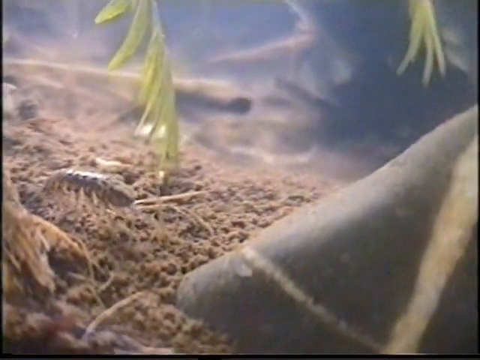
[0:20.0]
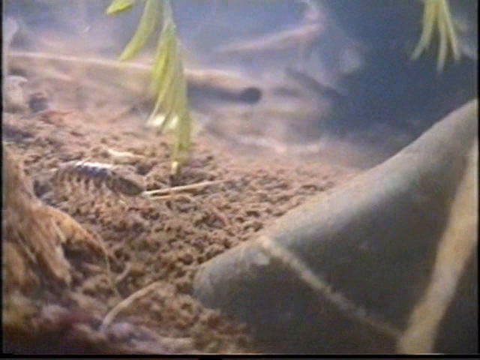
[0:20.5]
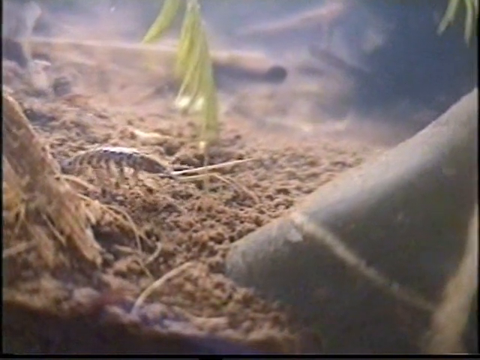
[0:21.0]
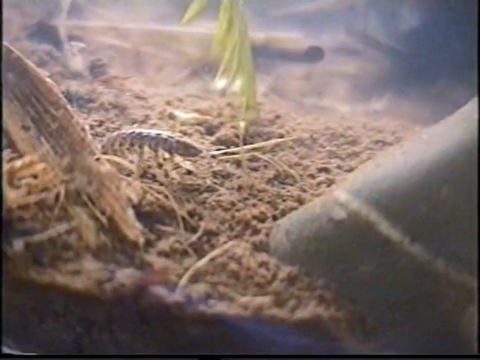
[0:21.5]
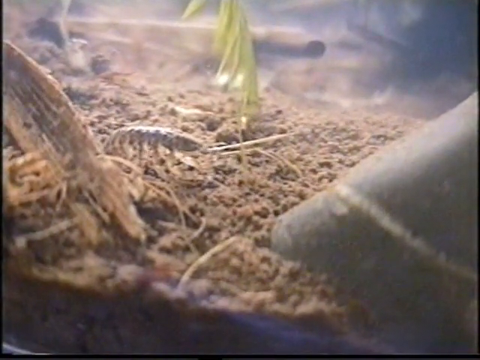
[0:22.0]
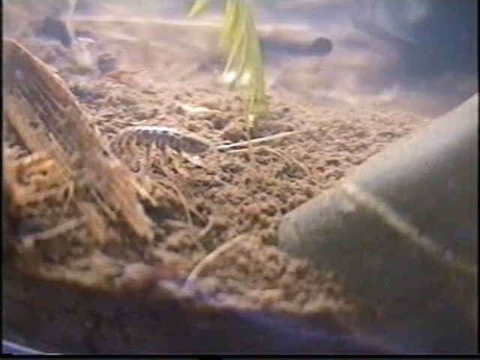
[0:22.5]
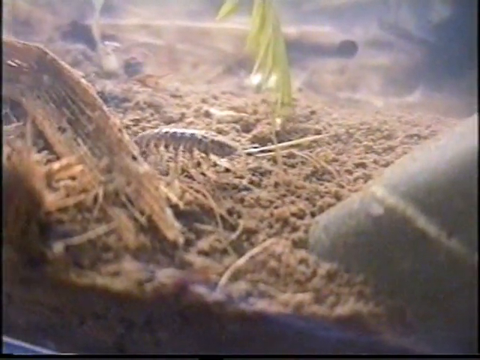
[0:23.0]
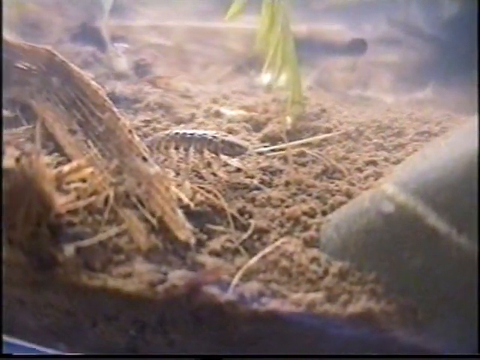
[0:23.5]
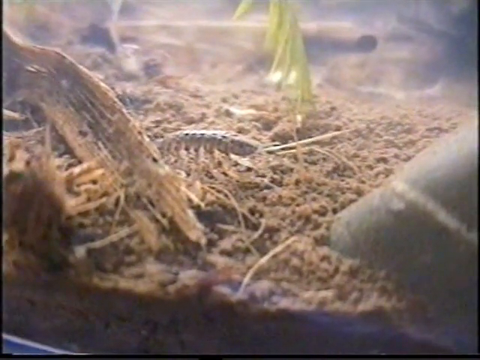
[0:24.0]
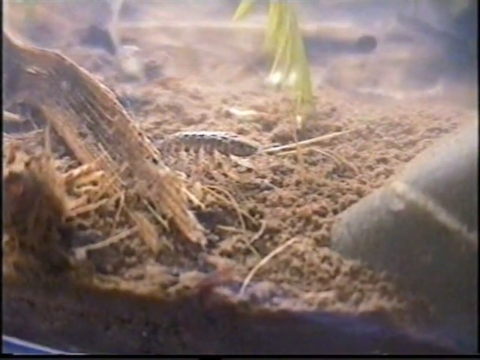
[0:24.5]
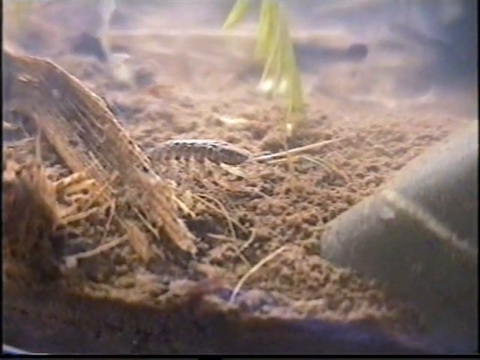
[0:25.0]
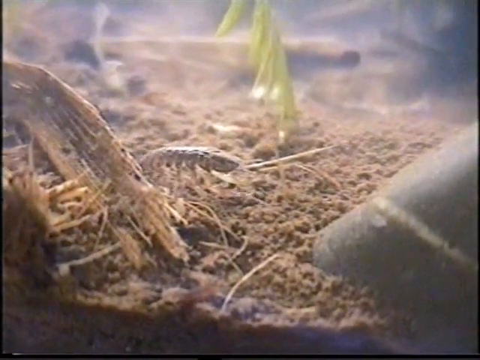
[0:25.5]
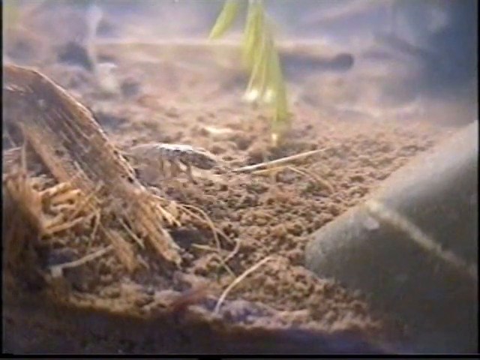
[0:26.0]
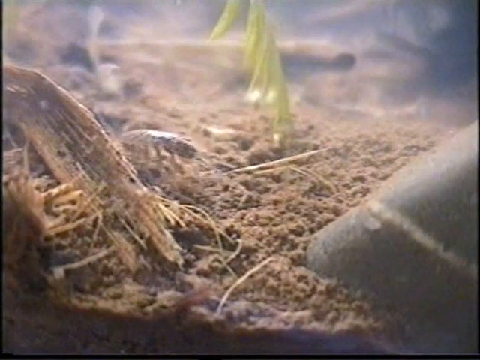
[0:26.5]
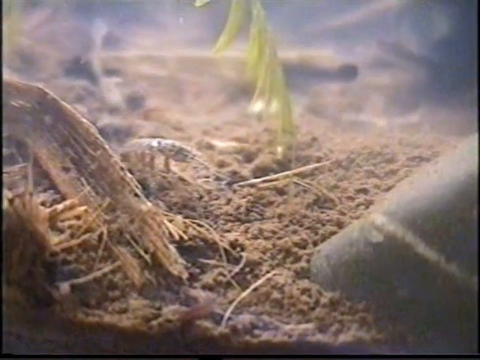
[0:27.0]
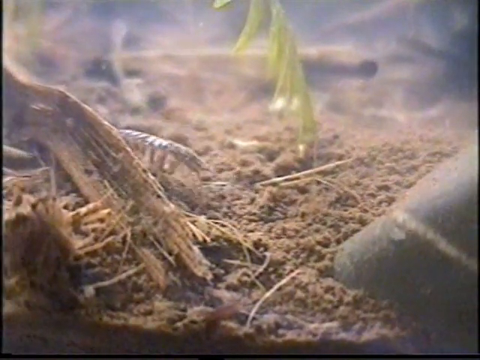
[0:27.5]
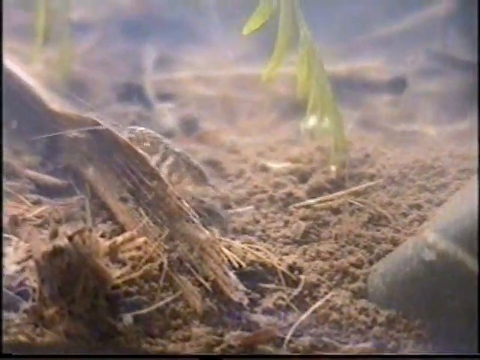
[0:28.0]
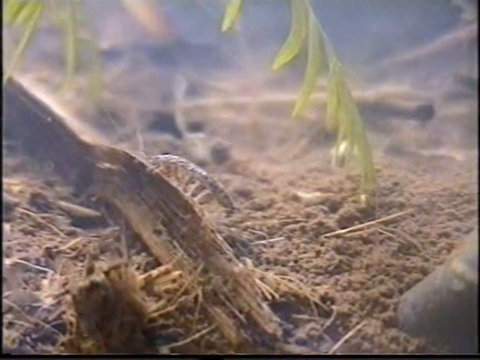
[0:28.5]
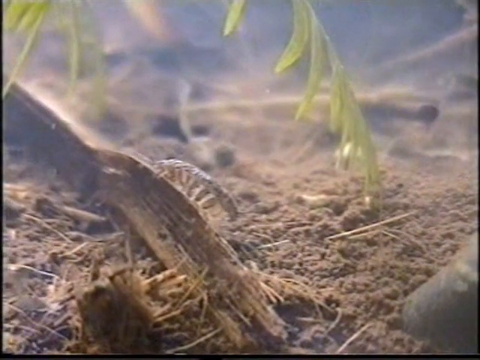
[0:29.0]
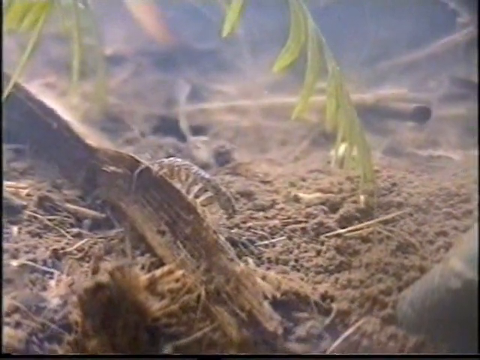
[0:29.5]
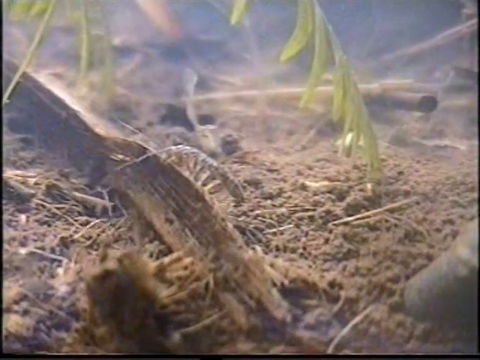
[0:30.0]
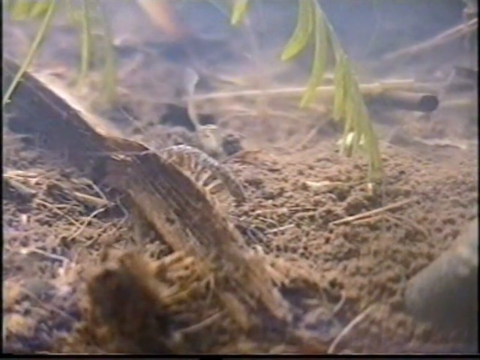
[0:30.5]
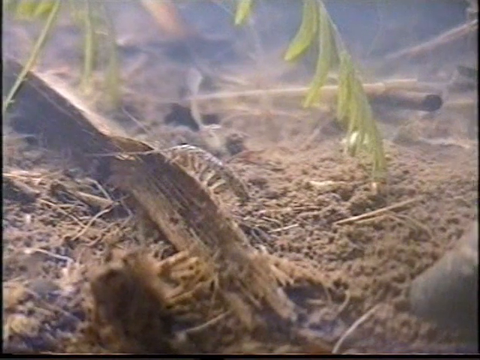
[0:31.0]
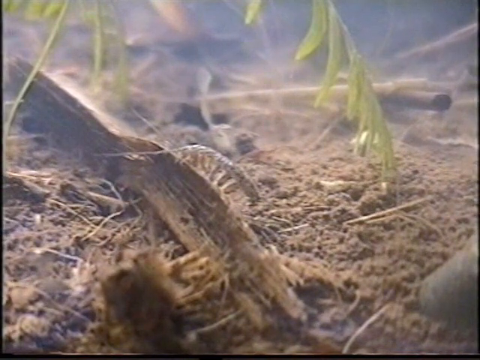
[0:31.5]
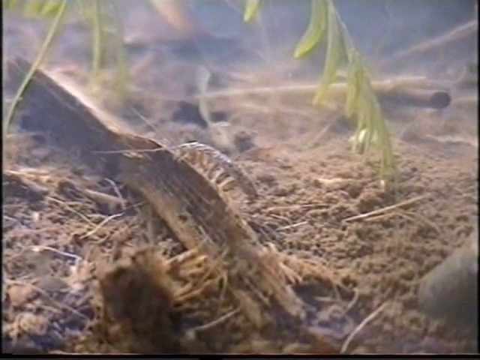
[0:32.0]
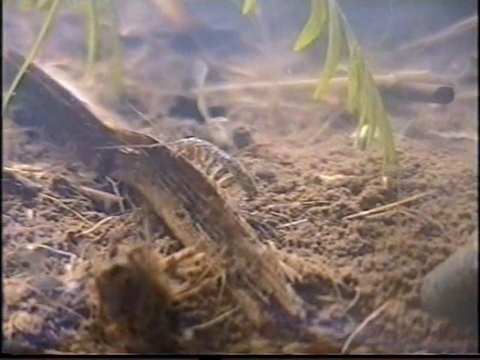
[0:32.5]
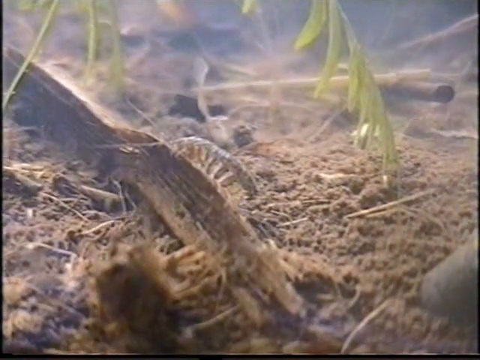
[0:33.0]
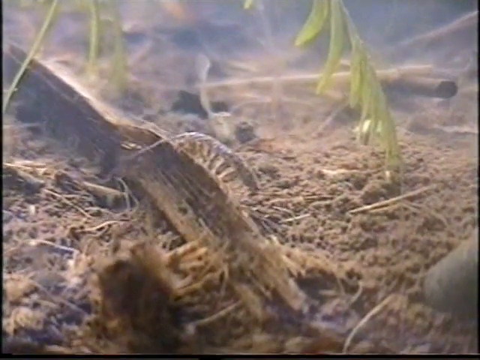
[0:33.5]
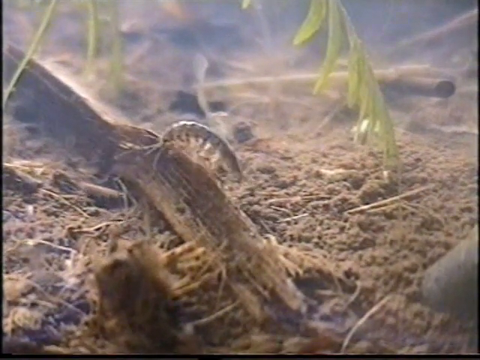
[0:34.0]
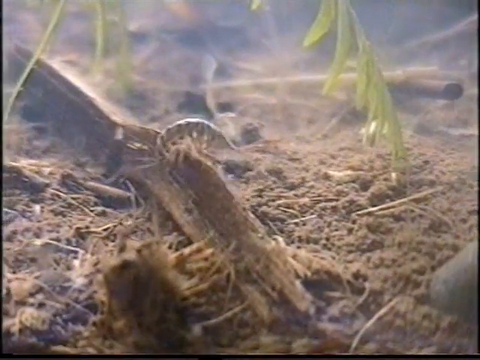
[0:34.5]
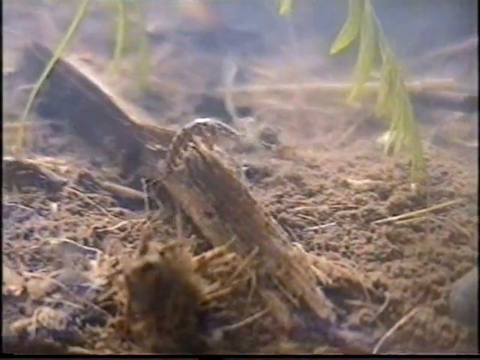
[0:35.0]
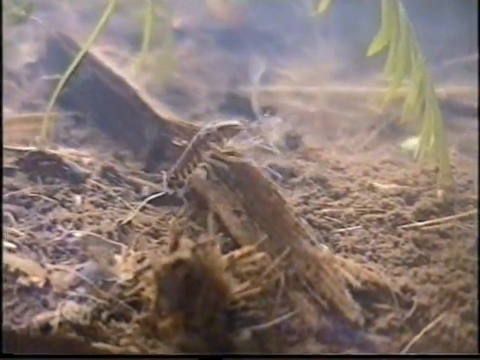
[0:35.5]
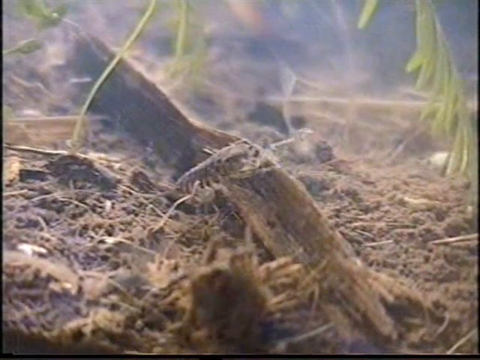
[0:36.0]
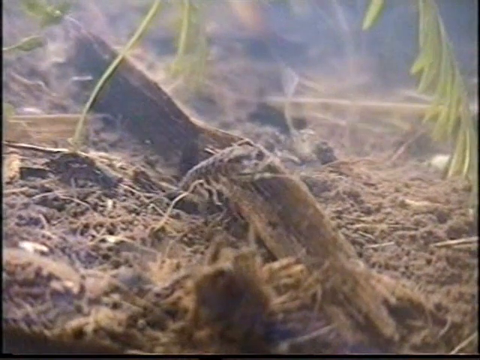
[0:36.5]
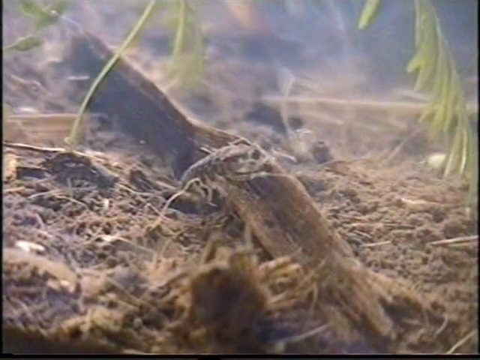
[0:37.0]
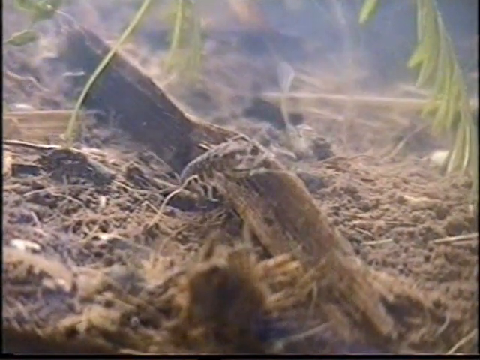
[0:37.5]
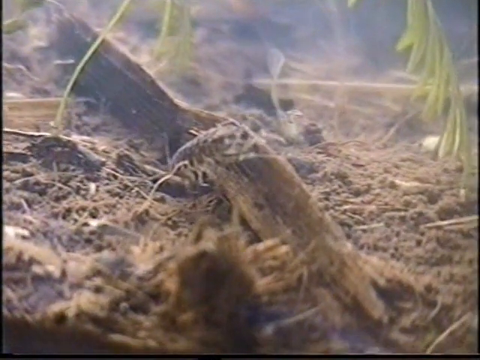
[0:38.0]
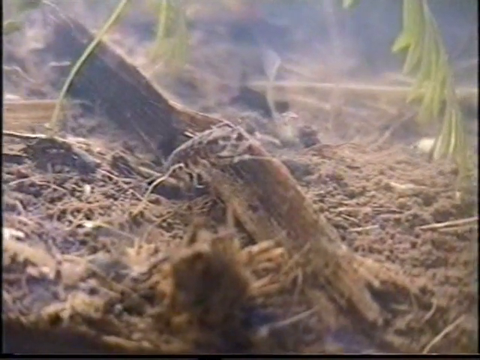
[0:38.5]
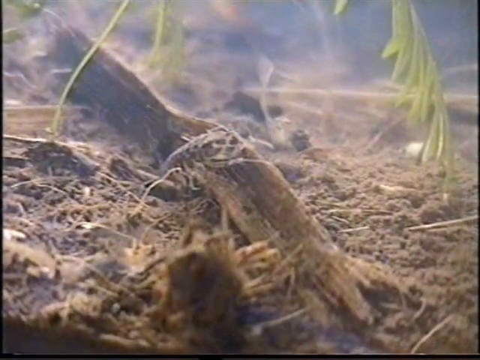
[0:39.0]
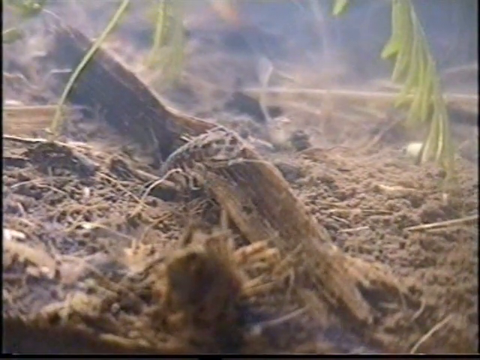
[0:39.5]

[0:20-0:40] The little pill-bug-type insect crawls on what looks like a broken stick of some sort, kind of pausing as it goes. Little granules of dirt or some type of moss are at the bottom of the water in the bowl. The crawling pill bug looks like it is maybe about one to two inches long. A little greenery with several leaves hangs down in the bowl. The water looks very murky and not very clear, and the bug is alone in this environment. Several stick-like figures are on the bottom of the clear tank as well. The bug looks as if it is searching for something in the water.